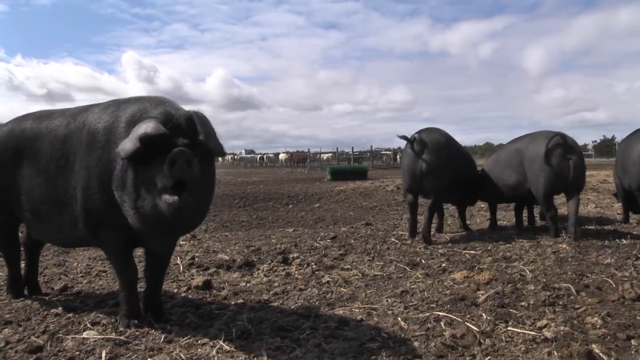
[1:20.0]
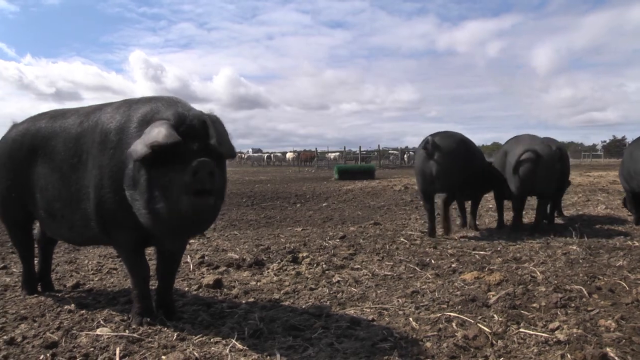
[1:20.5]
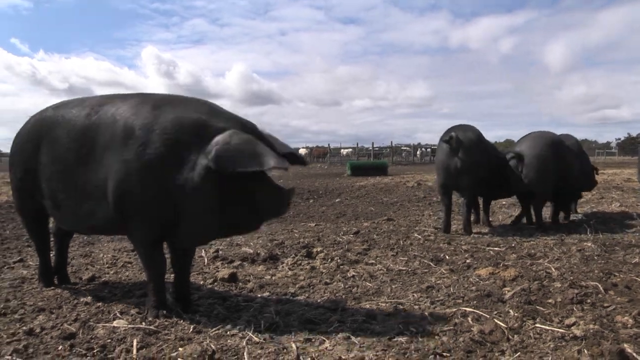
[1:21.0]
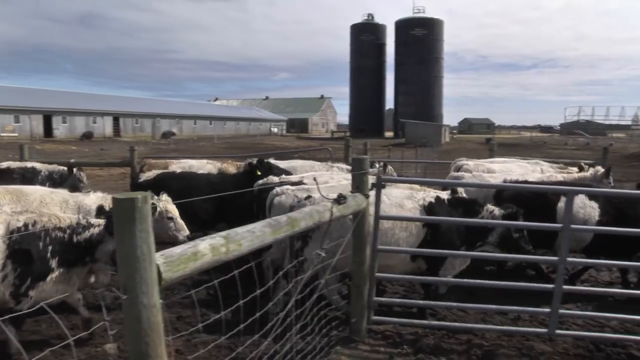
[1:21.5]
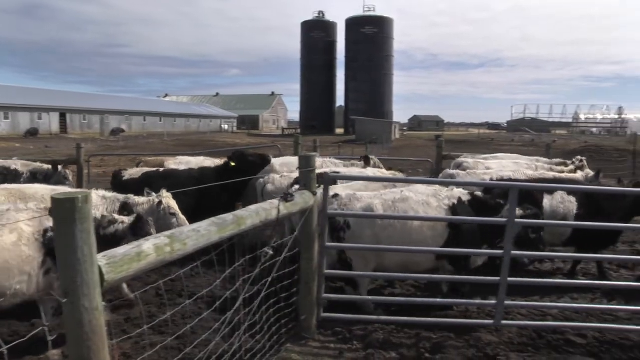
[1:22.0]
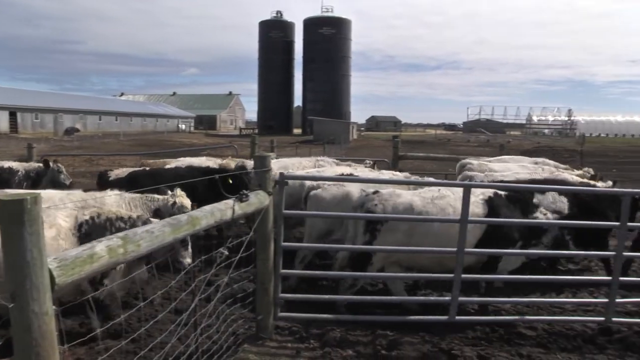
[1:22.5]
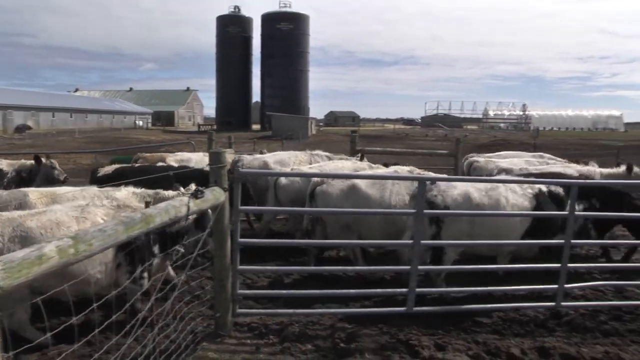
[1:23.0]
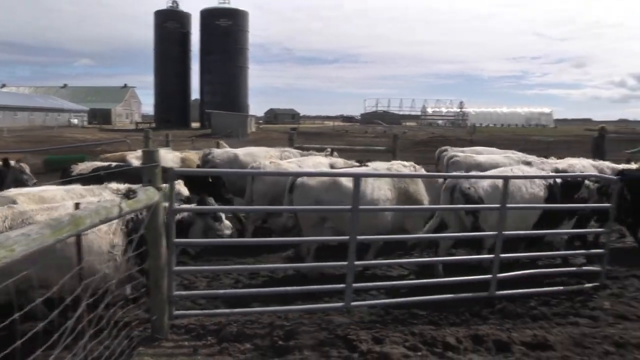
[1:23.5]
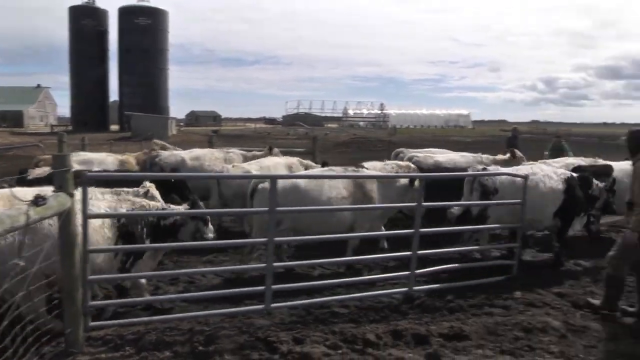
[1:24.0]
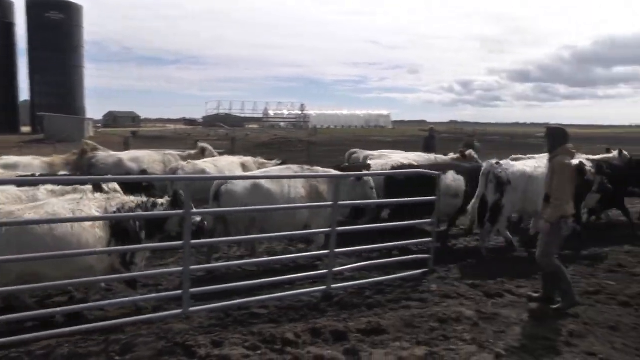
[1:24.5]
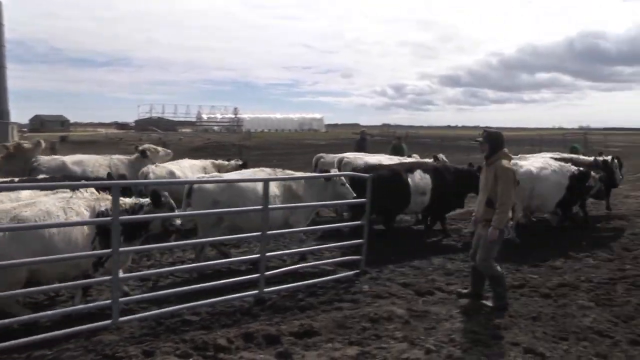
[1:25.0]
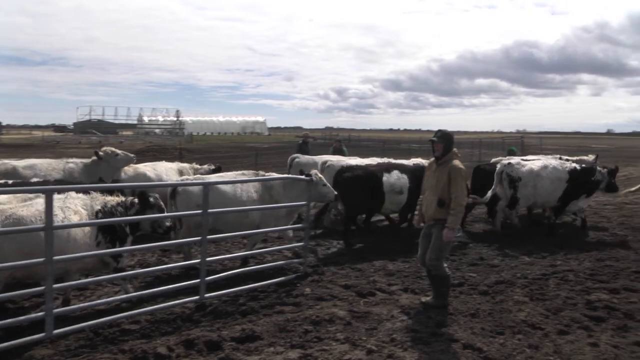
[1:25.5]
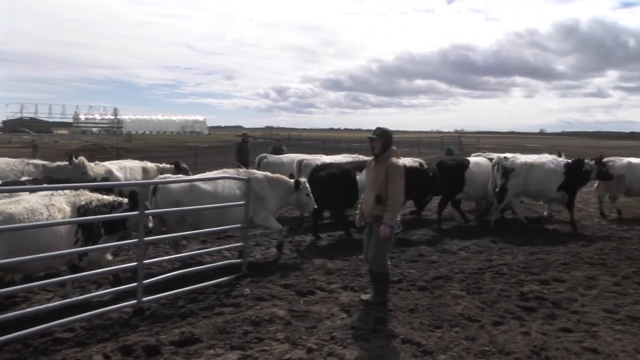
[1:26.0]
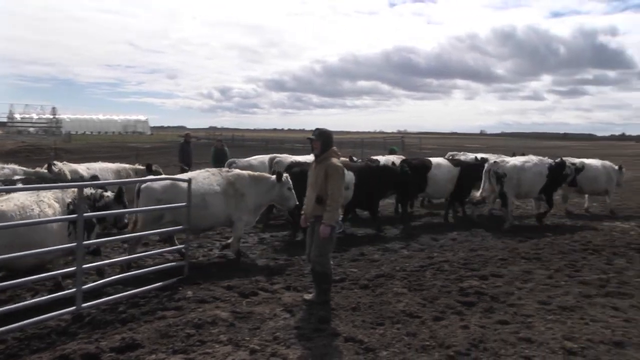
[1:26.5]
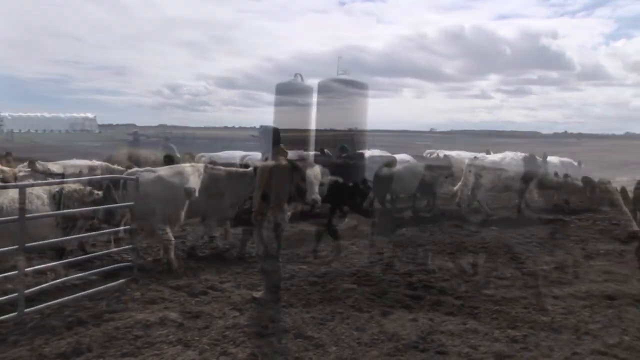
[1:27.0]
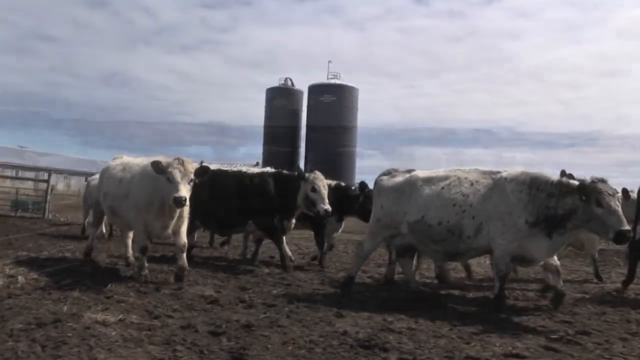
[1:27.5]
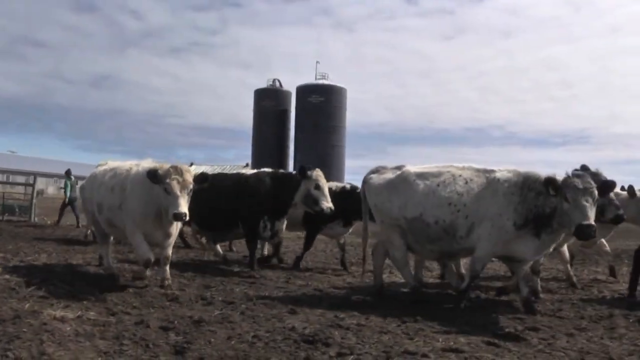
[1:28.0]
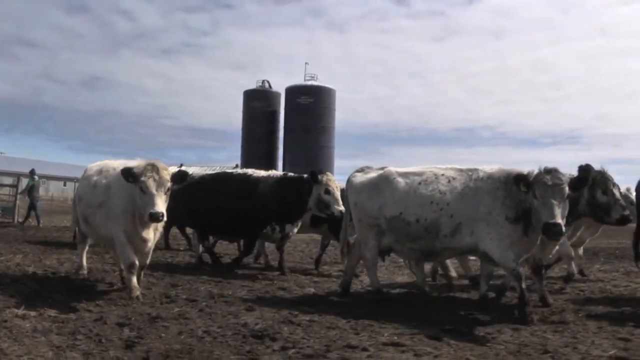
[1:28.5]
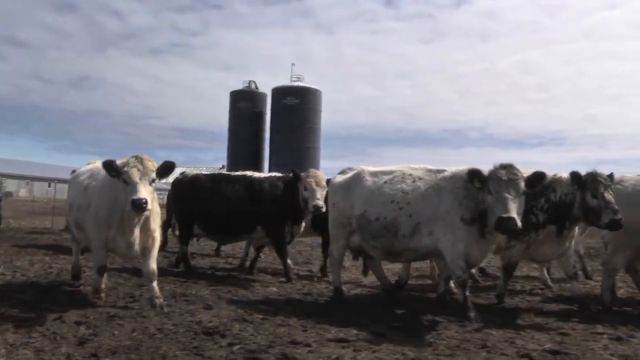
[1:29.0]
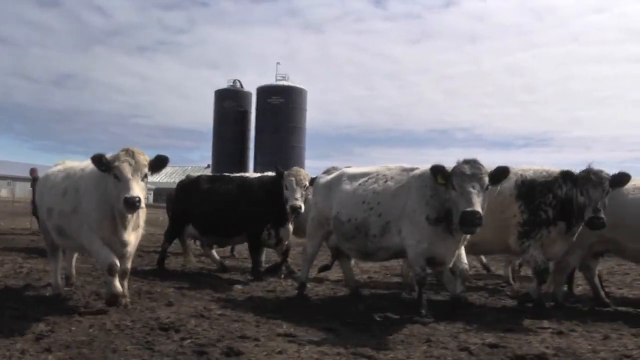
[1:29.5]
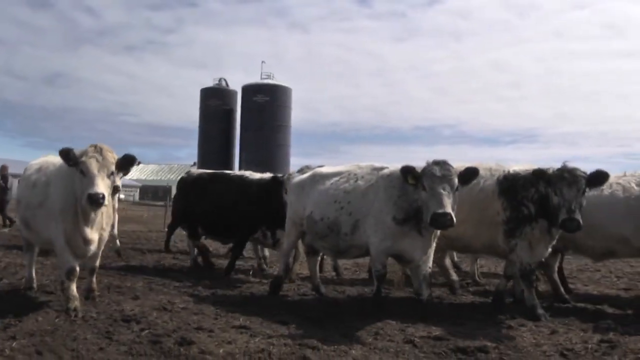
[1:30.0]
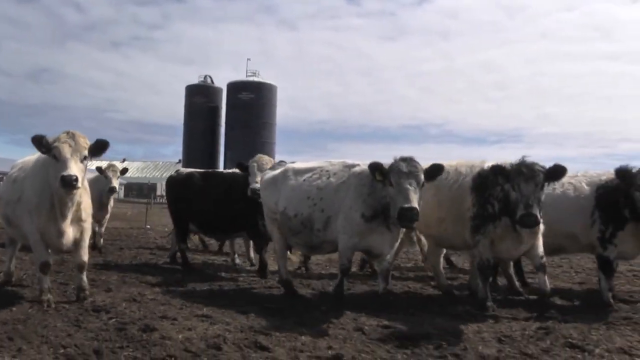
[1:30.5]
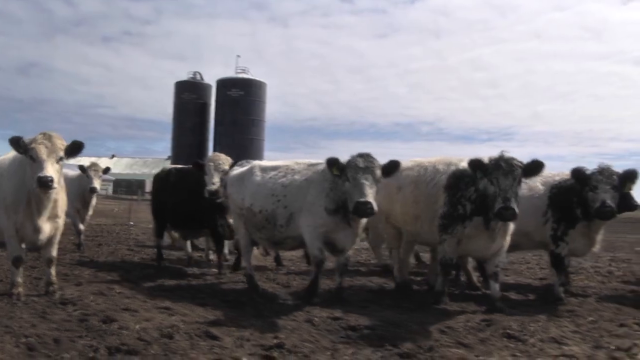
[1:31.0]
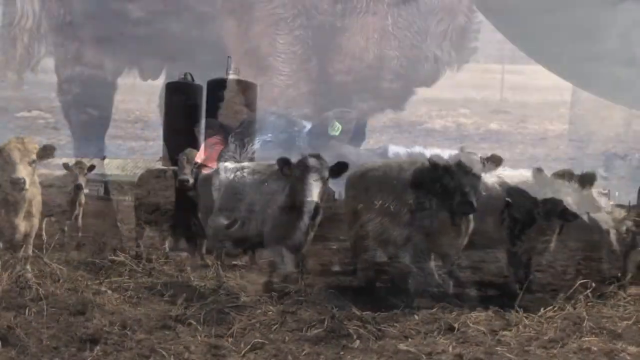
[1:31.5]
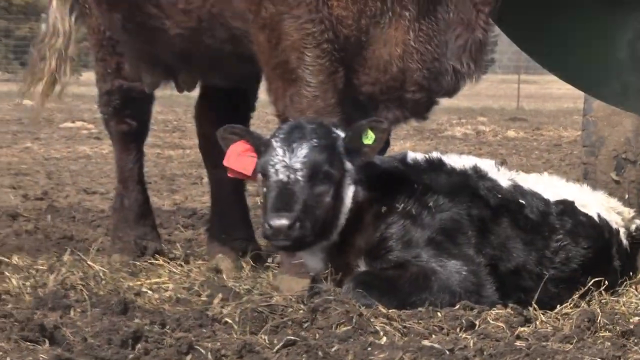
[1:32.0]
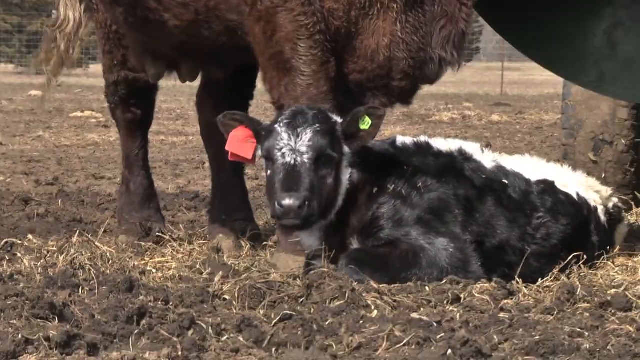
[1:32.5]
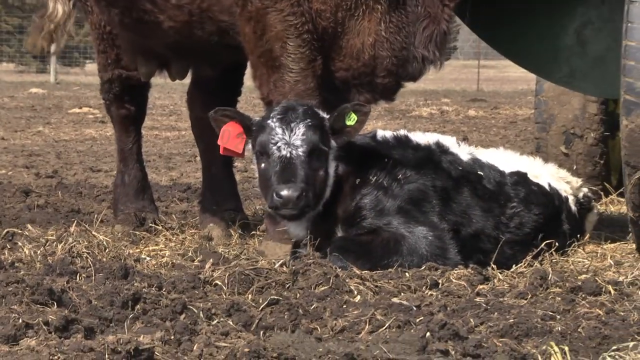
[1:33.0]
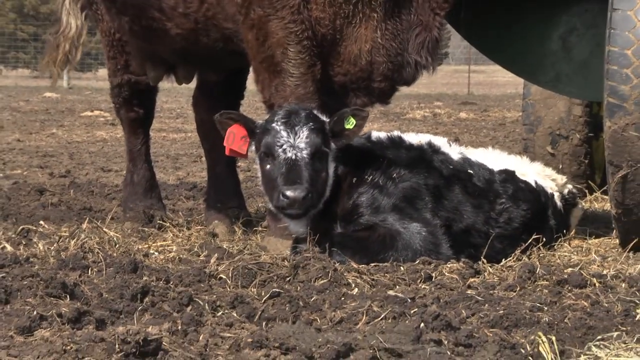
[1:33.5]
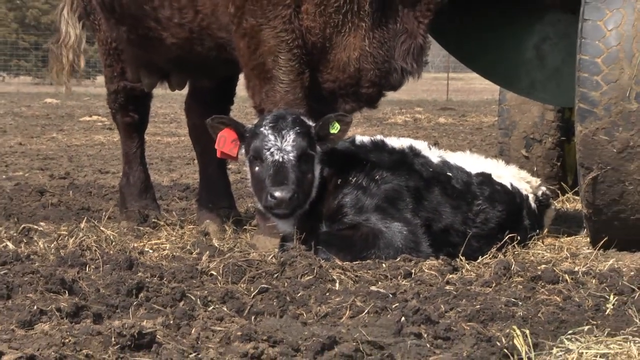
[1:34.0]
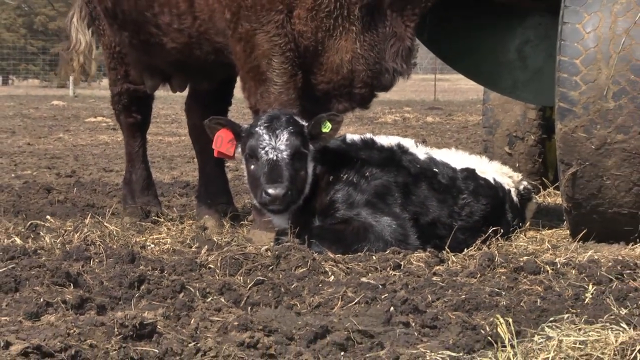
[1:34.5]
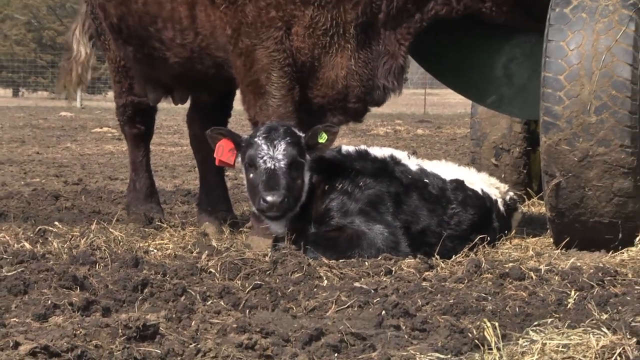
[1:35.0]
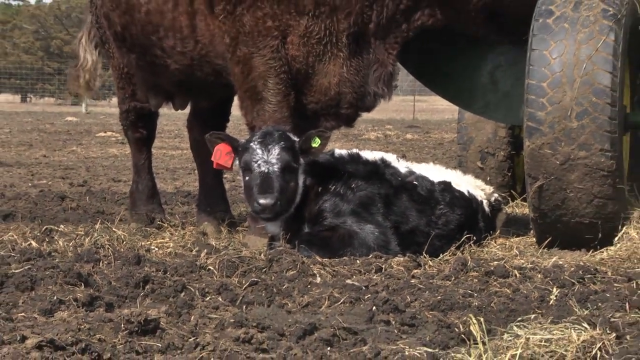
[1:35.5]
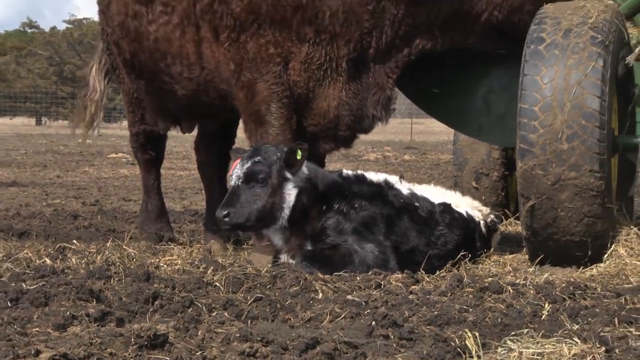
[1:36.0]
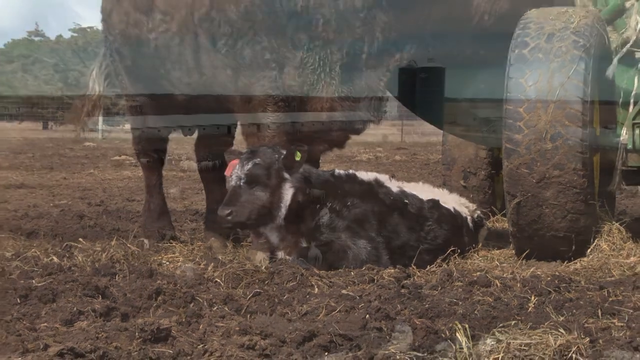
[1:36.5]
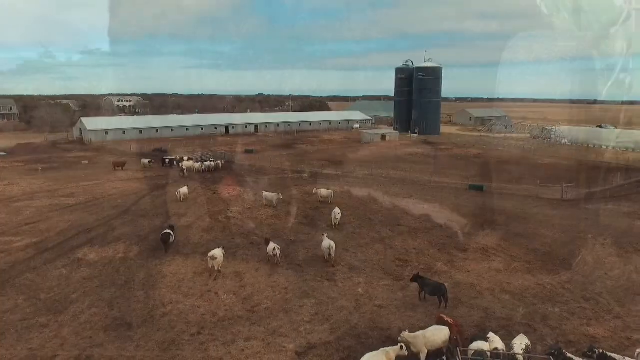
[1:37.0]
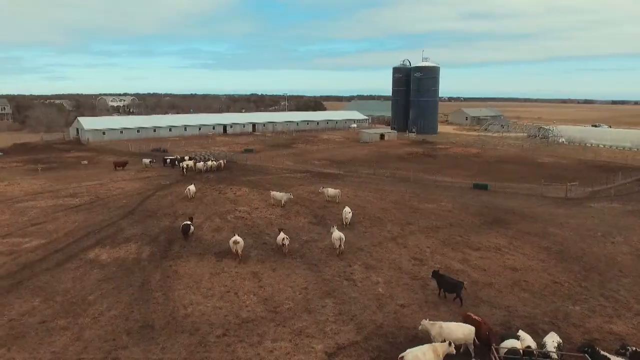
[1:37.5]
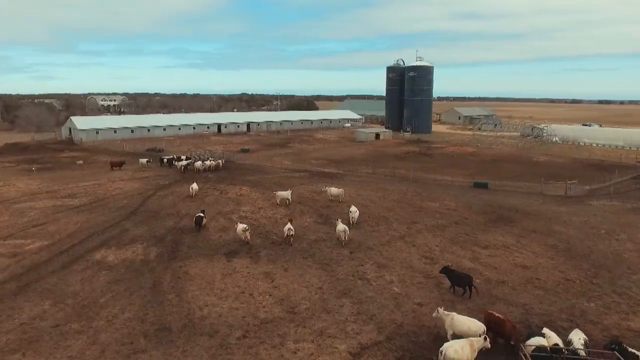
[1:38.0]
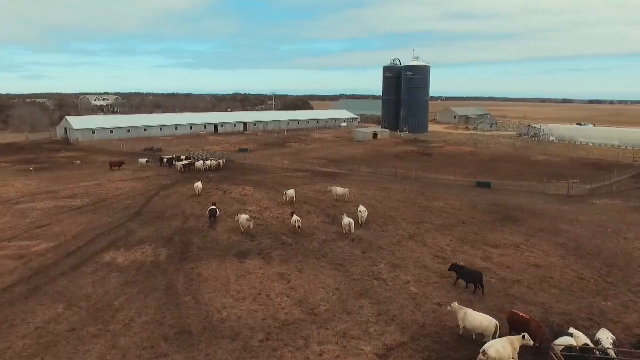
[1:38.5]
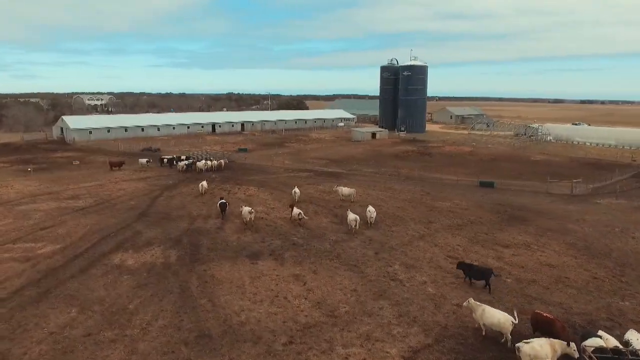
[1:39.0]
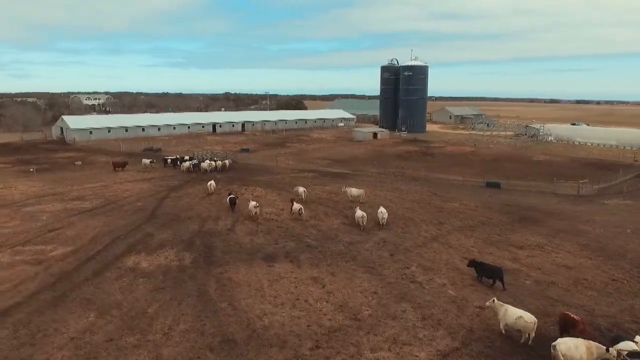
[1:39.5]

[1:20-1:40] In a field outside are black pigs. A large black pig is stood on the left of the screen and then turns around to look at three other black pigs on the right. Another shot shows some cows walking through a gated pathway in front of the tall black towers to go to the pasture, guided by some men; they walk and look at the camera. A close-up shows a black and white calf with a white splodge on its head between its eyes, stood next to a brown cow; it is lying next to a farm vehicle. An aerial overhead shot then shows the cows in the pasture, some of them running towards the gated area.